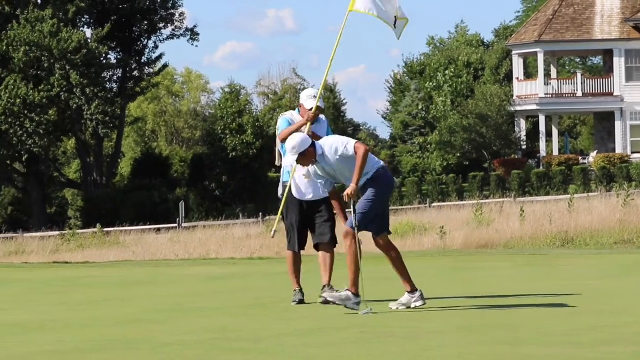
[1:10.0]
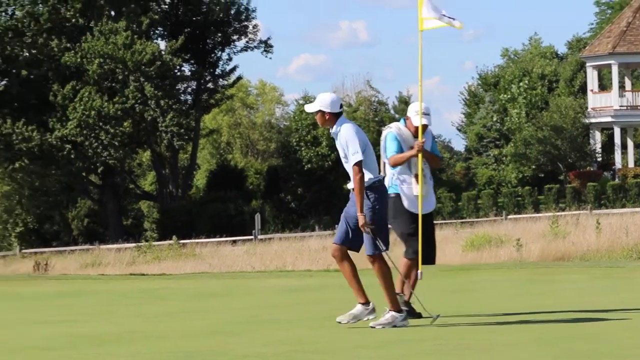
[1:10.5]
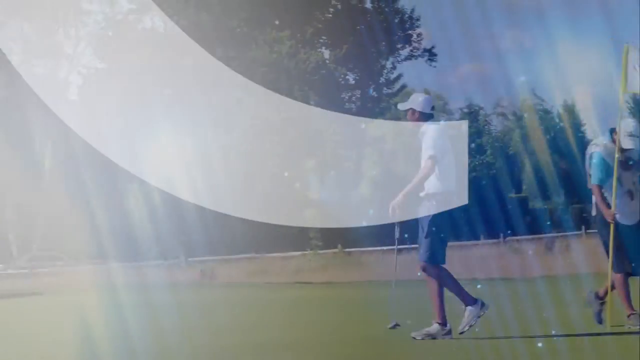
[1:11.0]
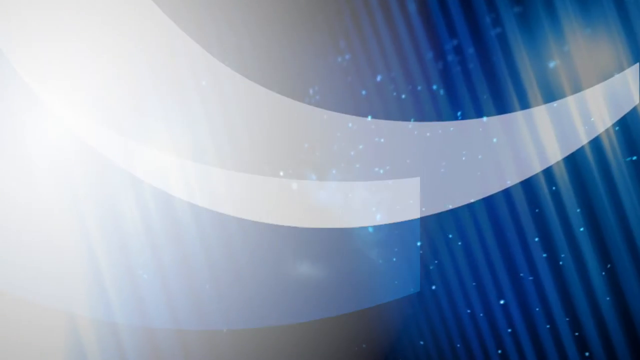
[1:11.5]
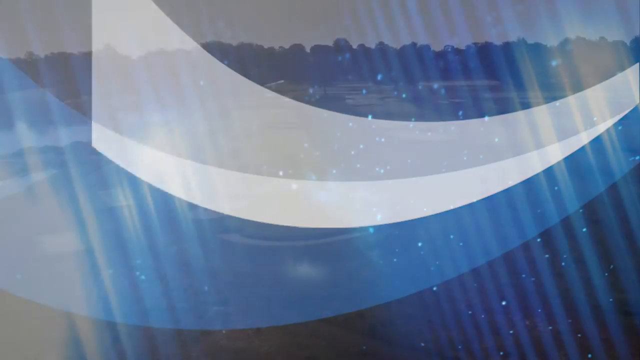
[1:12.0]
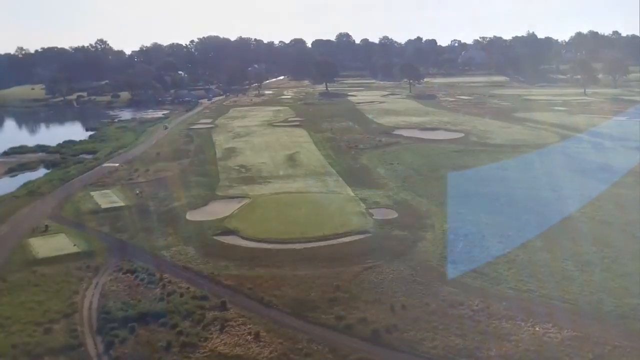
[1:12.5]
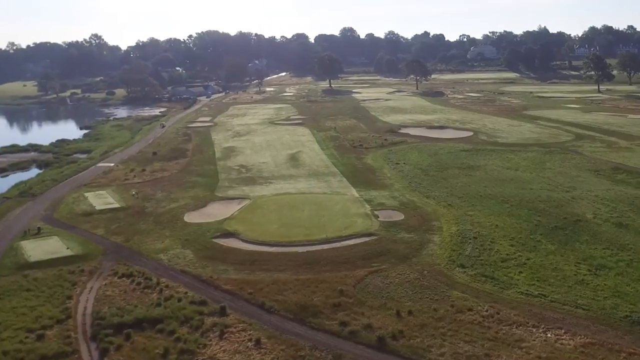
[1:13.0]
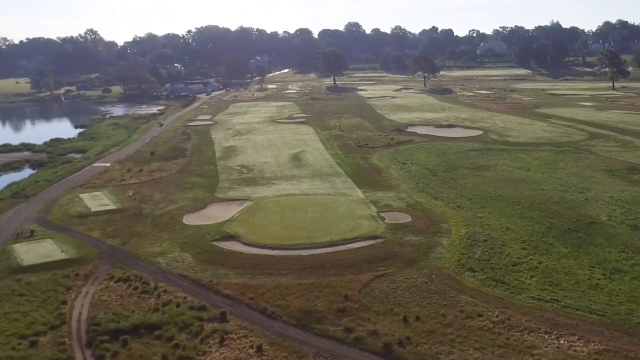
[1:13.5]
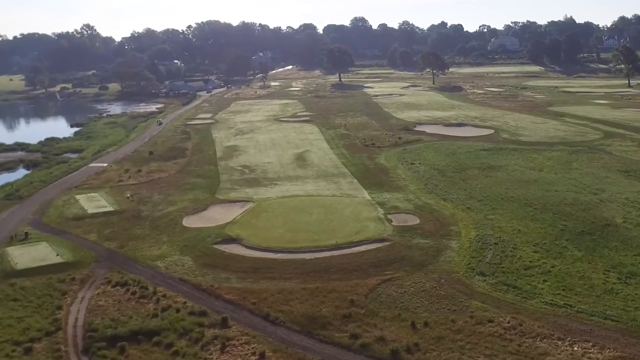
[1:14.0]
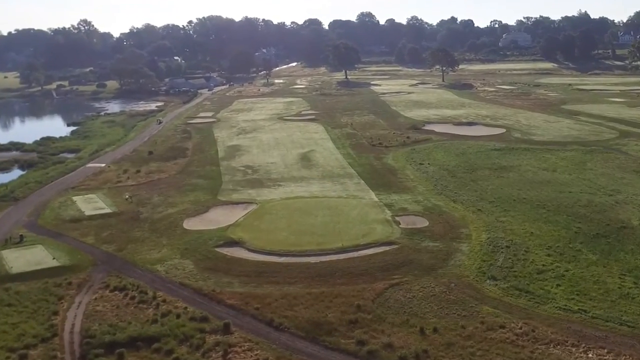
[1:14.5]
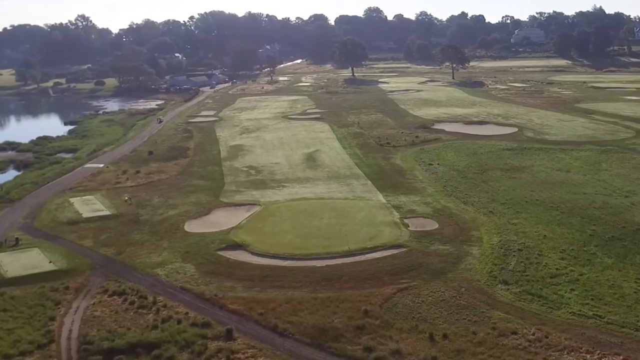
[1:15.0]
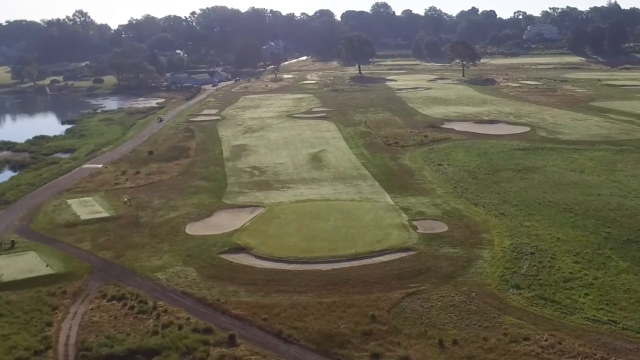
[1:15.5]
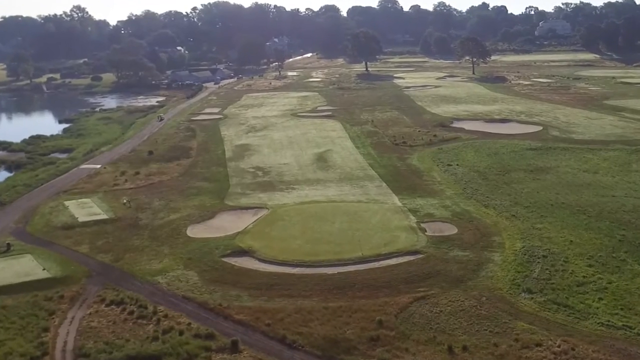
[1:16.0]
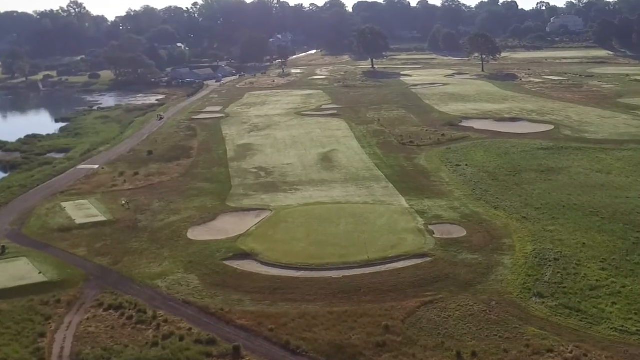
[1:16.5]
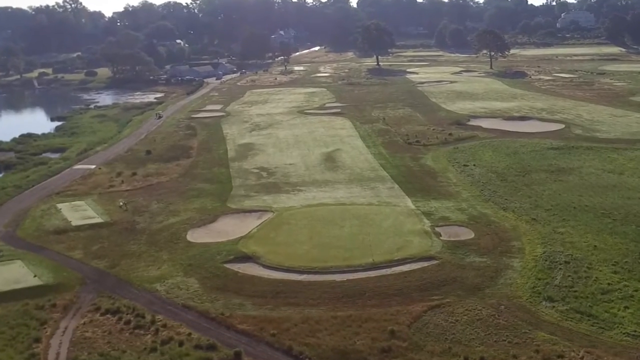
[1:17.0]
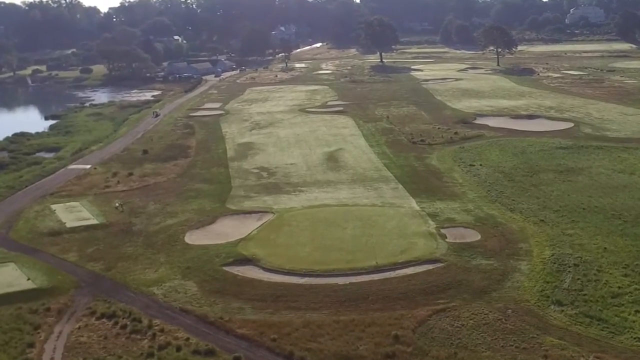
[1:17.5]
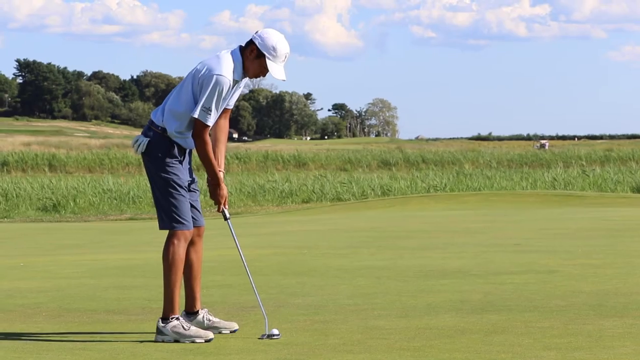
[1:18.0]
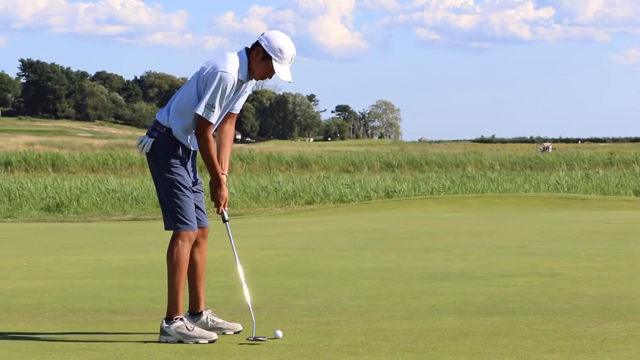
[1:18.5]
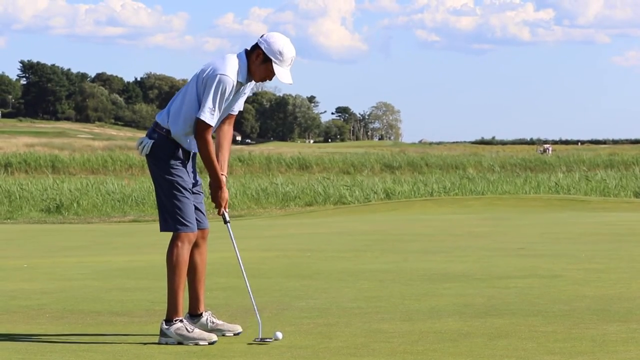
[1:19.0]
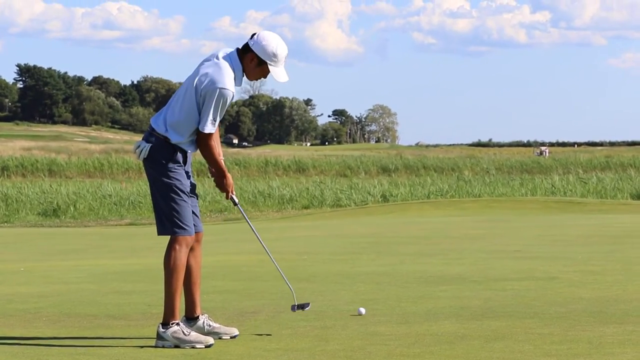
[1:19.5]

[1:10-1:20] Another blue graphic-style transition, the same one used throughout the video, leads to a drone shot of a putting green with some sand and a river on the left-hand side. There seems to be a small road running along the left of the course. The golf player in blue shorts takes another putt, but the video cuts before the putt is completed, so it is unclear whether it goes in. In this aerial shot the grass is still very green but has some areas of brown, and the sky appears more white than blue.